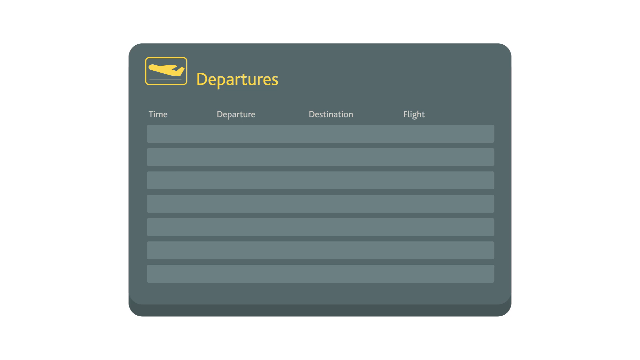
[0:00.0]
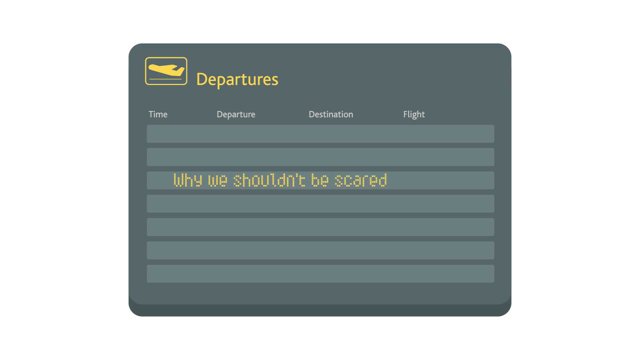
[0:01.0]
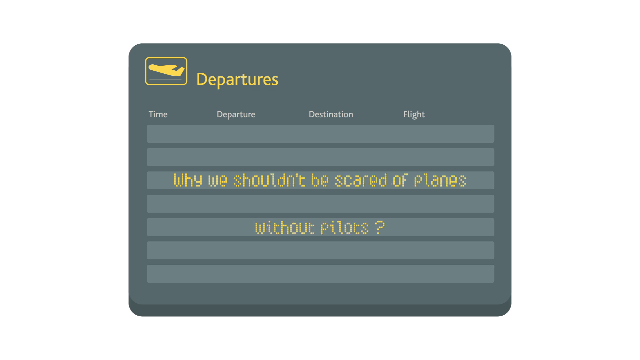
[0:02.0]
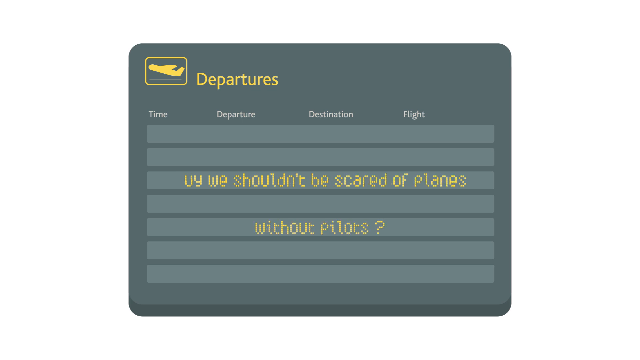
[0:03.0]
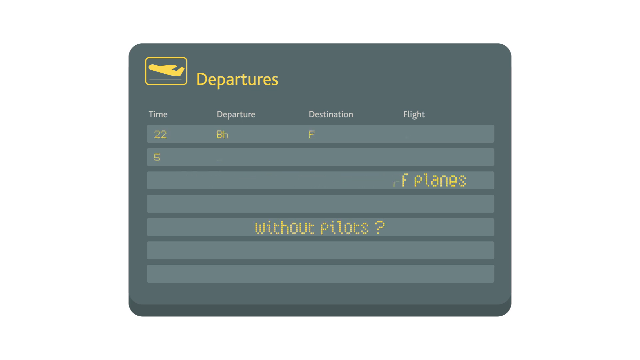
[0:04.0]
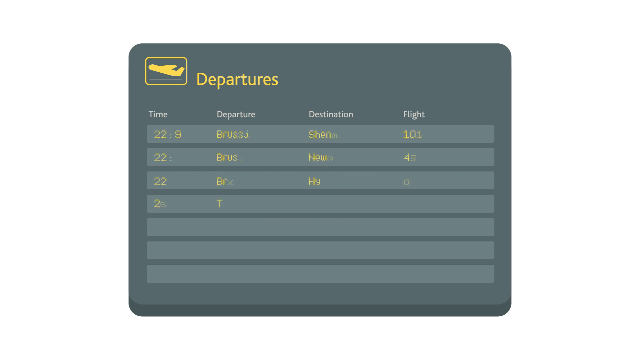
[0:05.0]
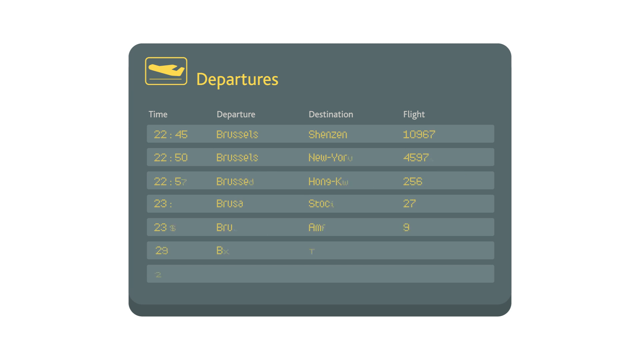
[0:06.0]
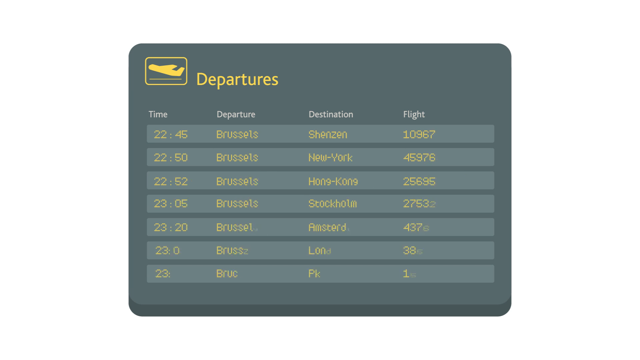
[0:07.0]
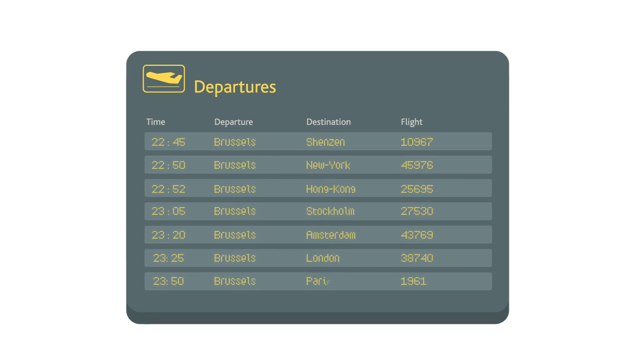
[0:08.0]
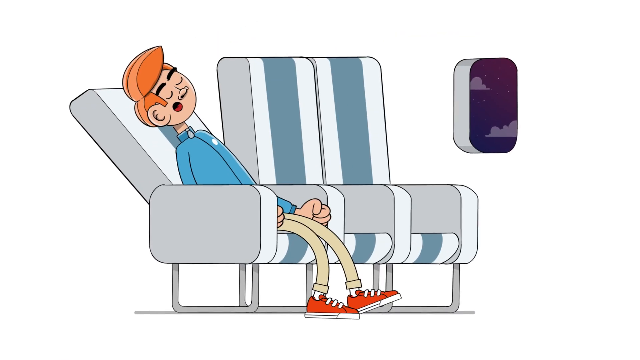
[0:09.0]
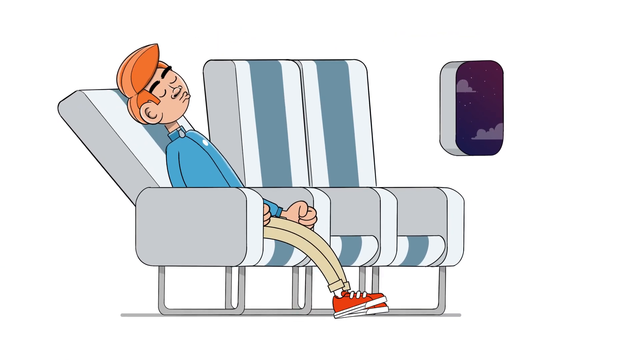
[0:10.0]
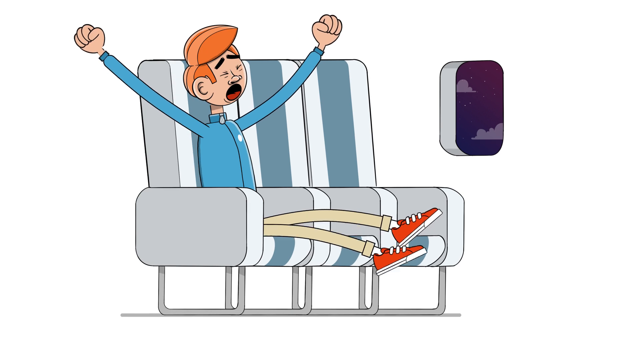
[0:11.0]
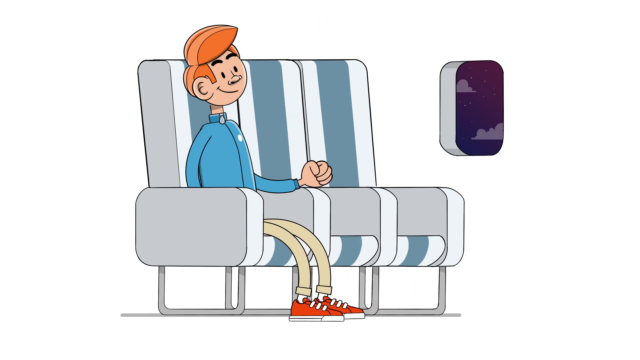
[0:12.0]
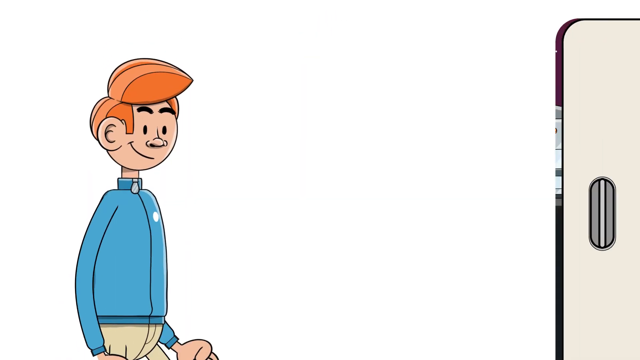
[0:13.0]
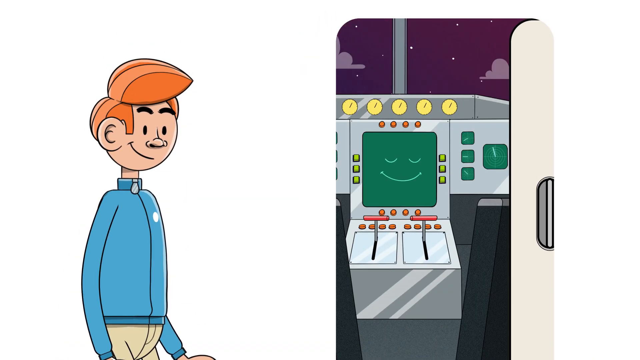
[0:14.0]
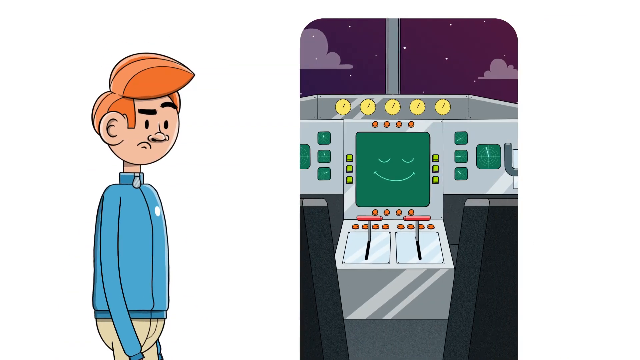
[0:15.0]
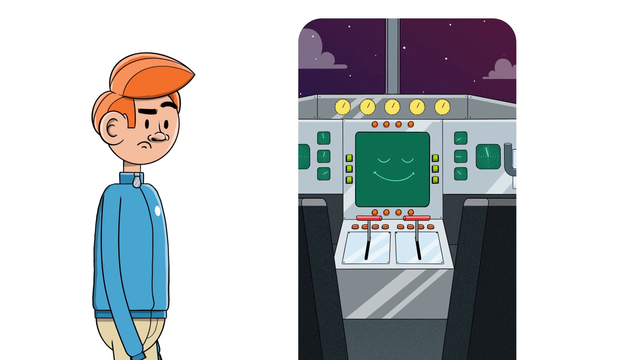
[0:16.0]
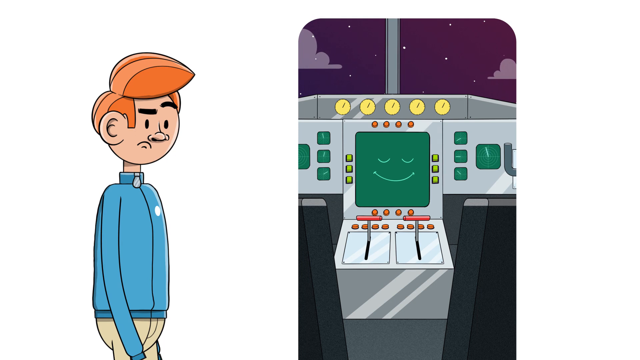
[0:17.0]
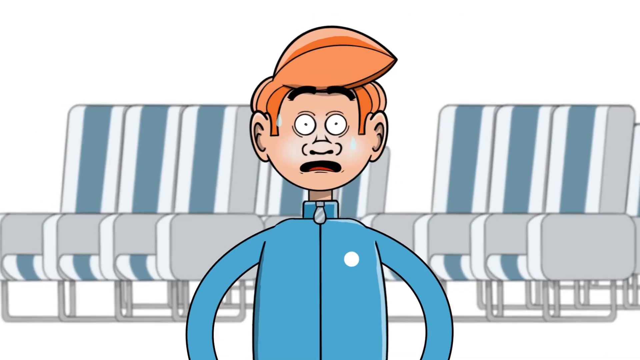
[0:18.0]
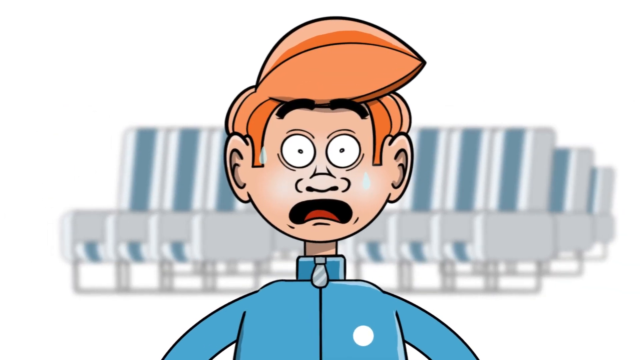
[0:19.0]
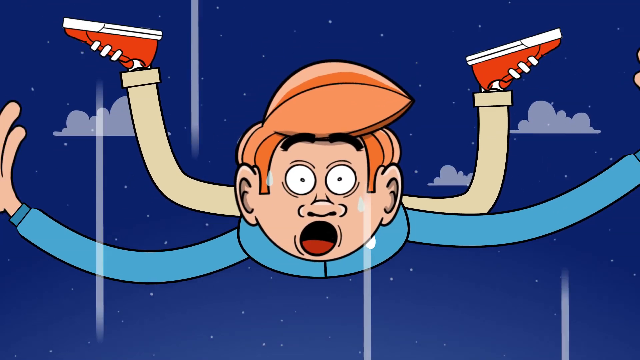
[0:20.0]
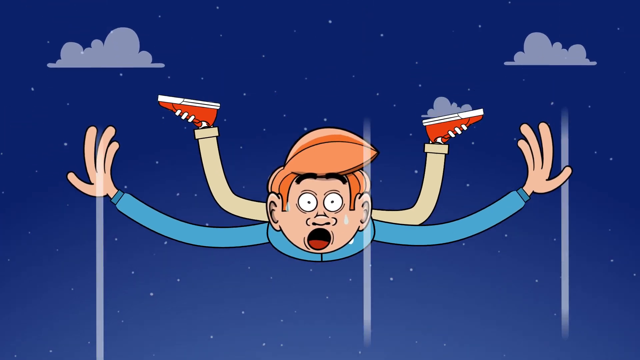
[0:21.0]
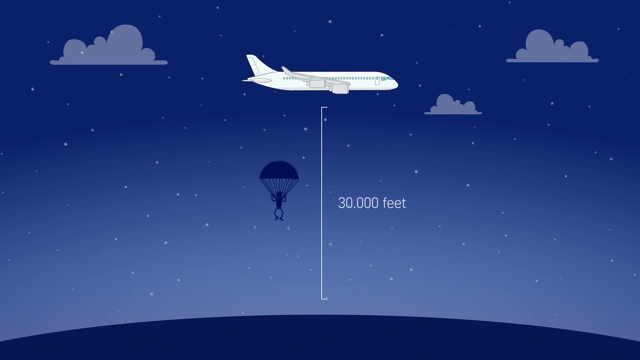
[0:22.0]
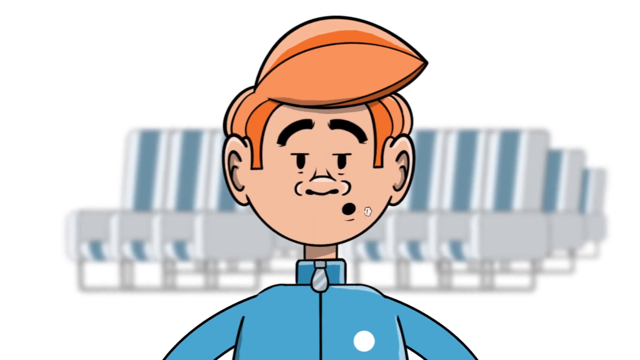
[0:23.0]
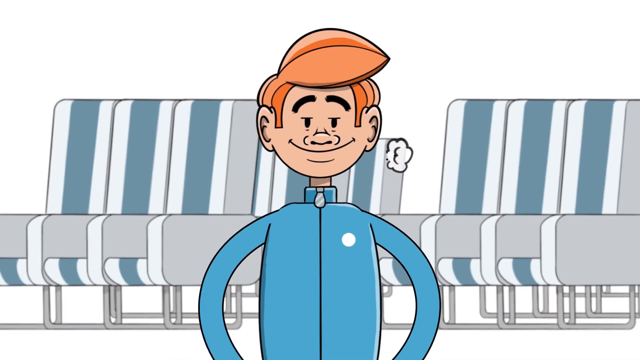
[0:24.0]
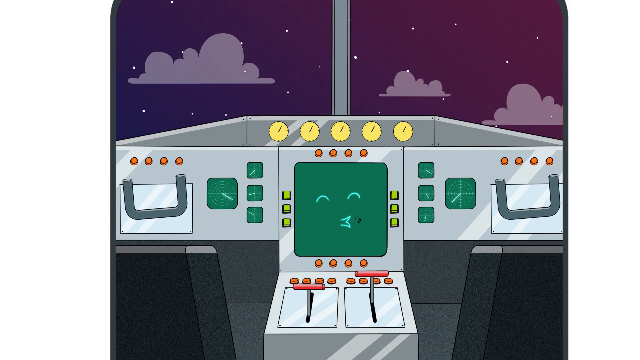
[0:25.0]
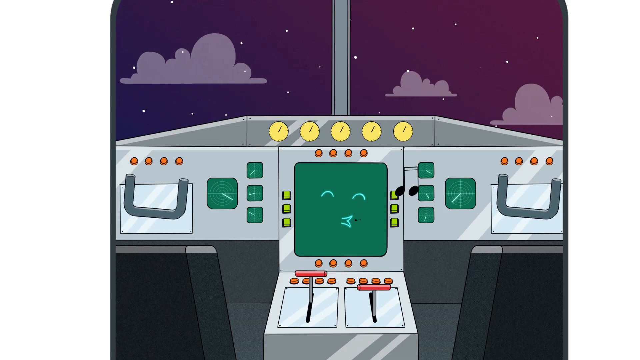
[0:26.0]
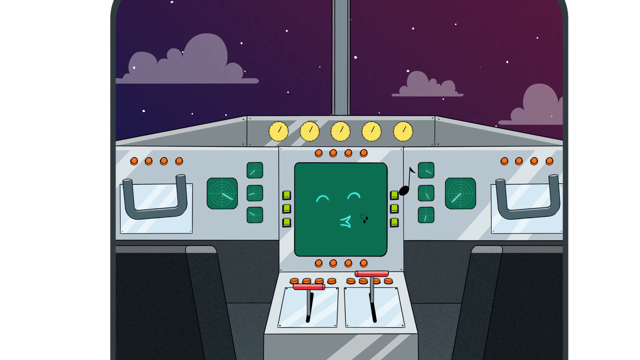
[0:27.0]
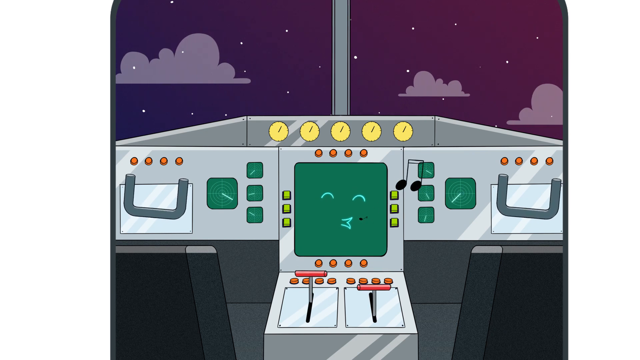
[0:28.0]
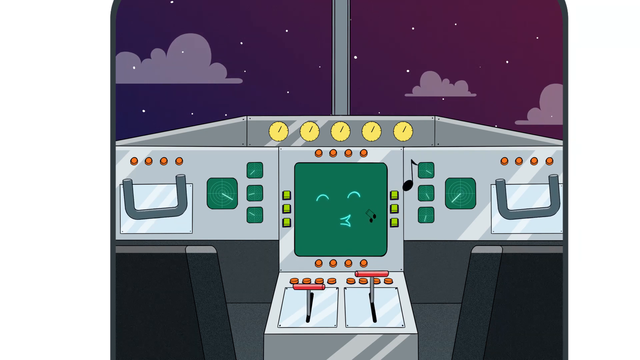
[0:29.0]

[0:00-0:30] A drawing of a green flight departures board is set on a white background. At the top, "departures" is written in gold, and in the top left a small rectangle holds a drawing of a golden plane flying up into the air. The board has about eight slightly white rows, with the headings "time", "departure", "destination" and "flight" from left to right across the top. In the third row from the top the sentence "why we shouldn't be scared of planes" appears, and in the sixth row the words "without pilots?" appear. These sentences are then removed, and each row is replaced with departure cities, destination cities, flight numbers and times. The scene changes to a different drawing and animation: a red-headed man in a blue shirt, long khaki pants hanging around his thin legs, and red shoes is sleeping in what appears to be a reclined airplane seat. To his left are two other white seats with vertical blue stripes, and beyond them a plane window showing a purple sky with white clouds. He pulls up his reclined seat, stretches both hands into the air, yawns, and holds his legs parallel above the ground. Now awake, he smiles, with his left fist on the armrest to his left. Next, the same man, seen from the waist up, walks to a tan door on his right with a horizontal oval-shaped handle, and the door slides to the right. In the background is what looks to be the plane's console: mostly silver, with red buttons, five yellow clocks at the top, and a green square in the center showing a smiley face. To the right of the smiley face is a smaller square screen that looks like a radar, with a radar arm rotating around it, and on the left and right sides are multiple small green boxes, each with a rotating radar arm. A close-up from the front shows the red-headed man from the upper stomach up looking scared, with beads of sweat on his face and two rows of white and blue striped airplane seats behind him. The man is then shown falling out of the sky, seen from the front, his arms stretched out to the sides with fingertips pointing upward and his feet stretched to the left and right with the soles pointing upward.